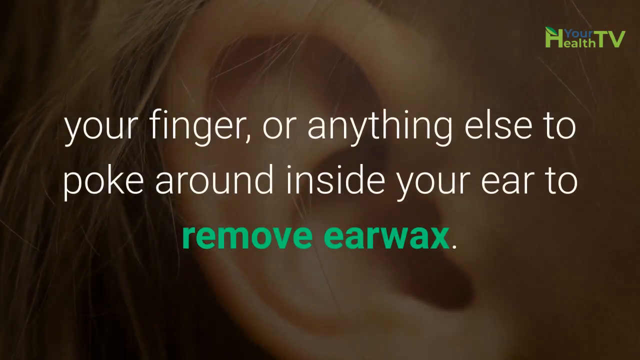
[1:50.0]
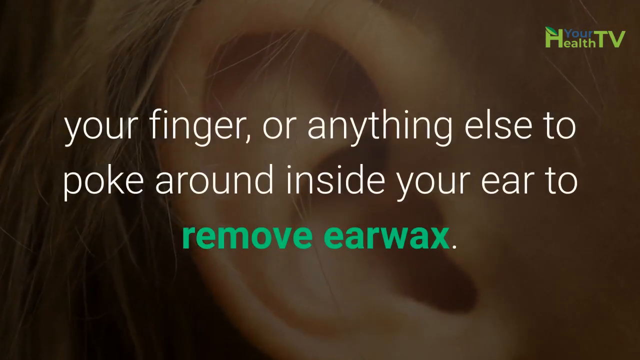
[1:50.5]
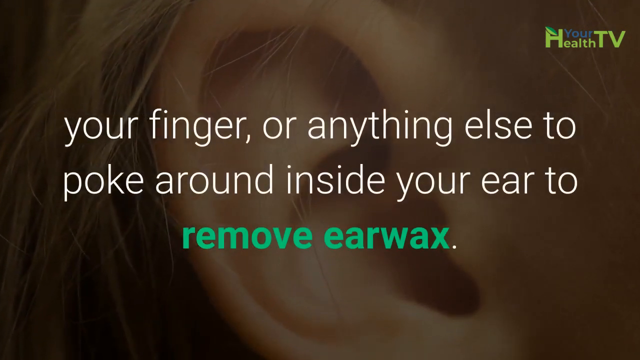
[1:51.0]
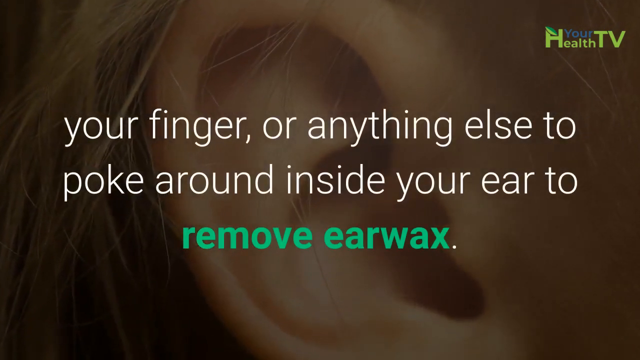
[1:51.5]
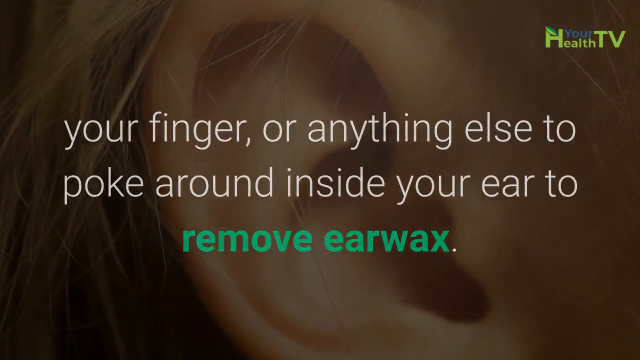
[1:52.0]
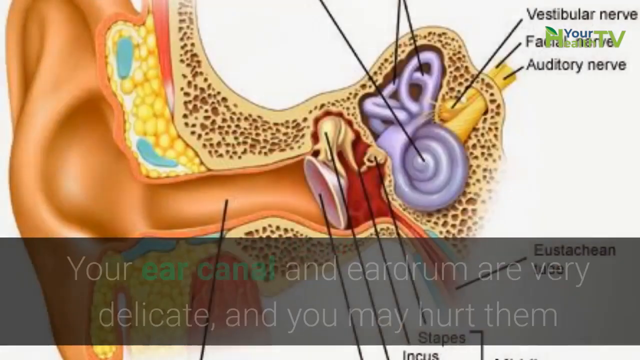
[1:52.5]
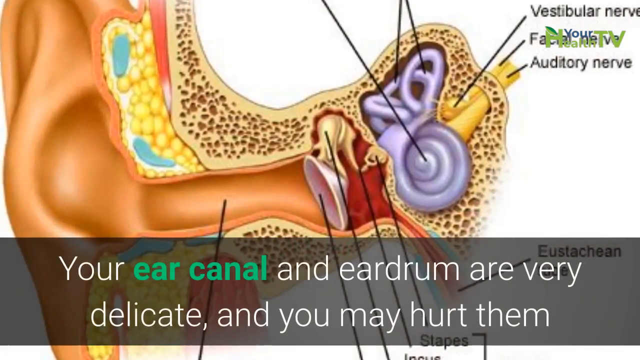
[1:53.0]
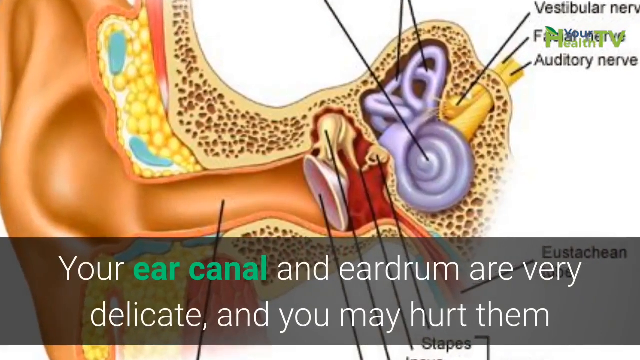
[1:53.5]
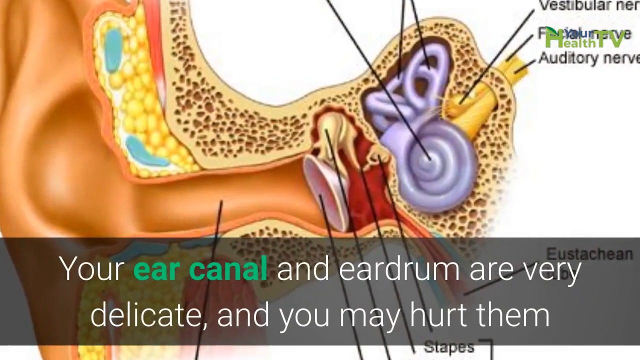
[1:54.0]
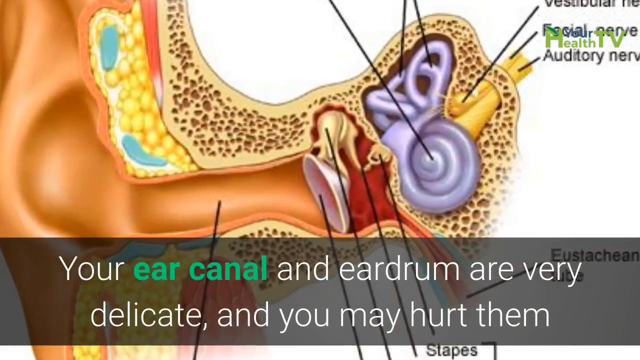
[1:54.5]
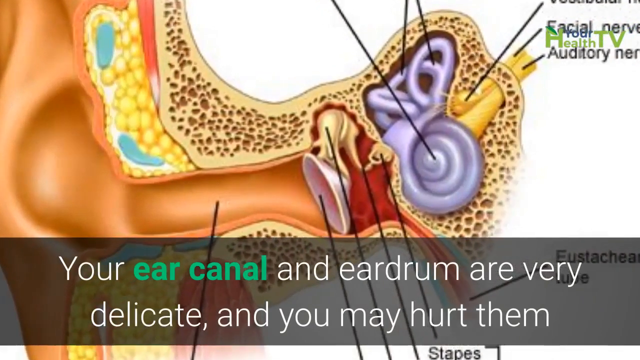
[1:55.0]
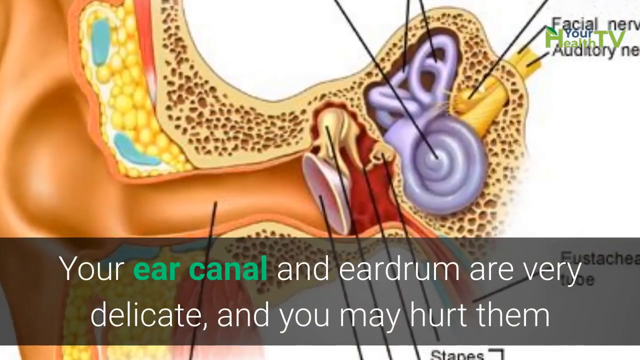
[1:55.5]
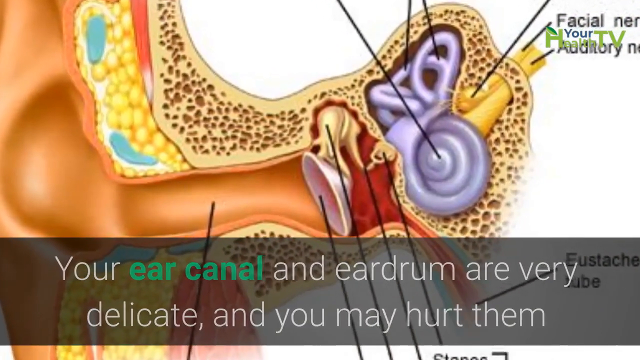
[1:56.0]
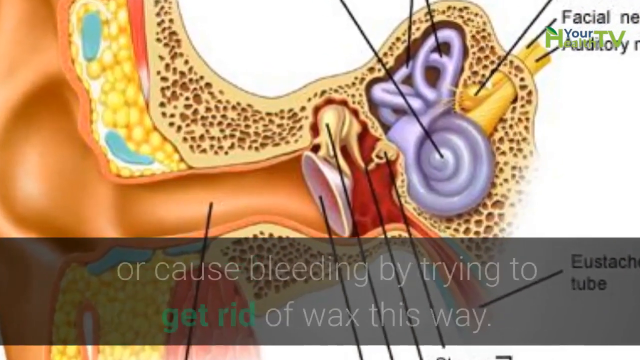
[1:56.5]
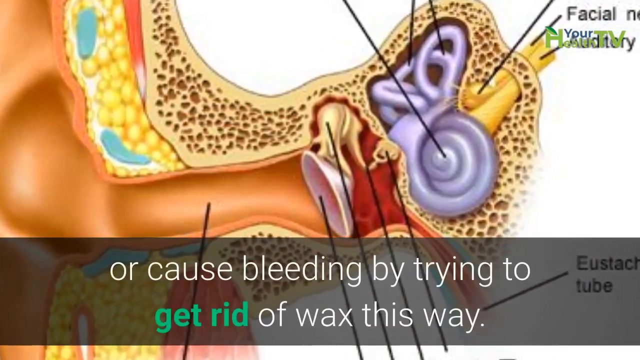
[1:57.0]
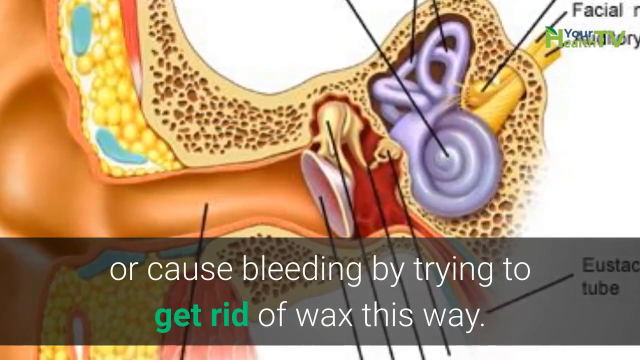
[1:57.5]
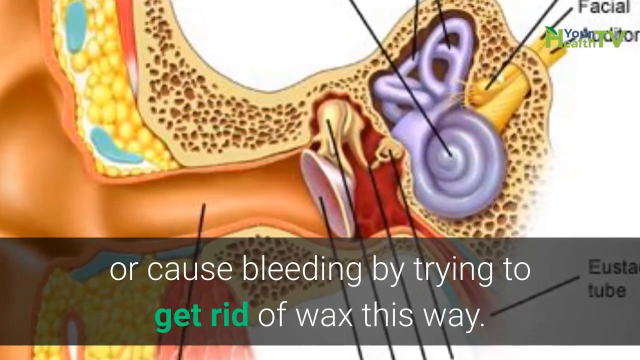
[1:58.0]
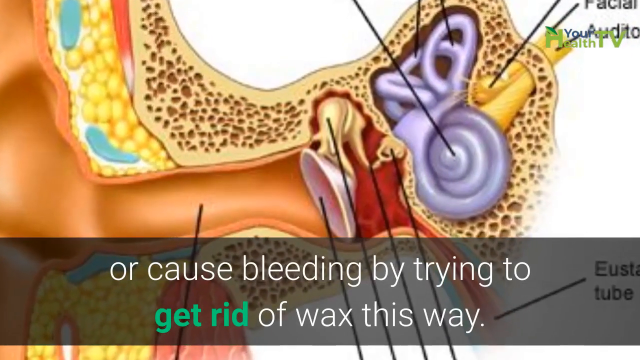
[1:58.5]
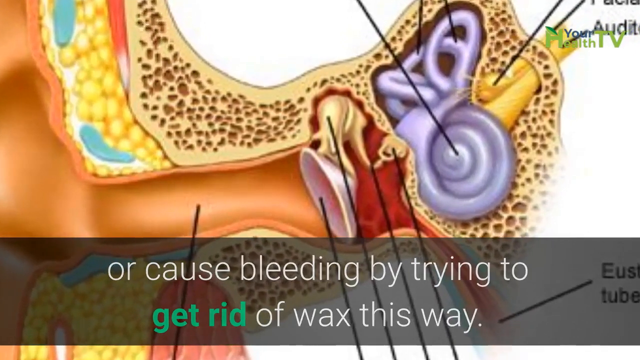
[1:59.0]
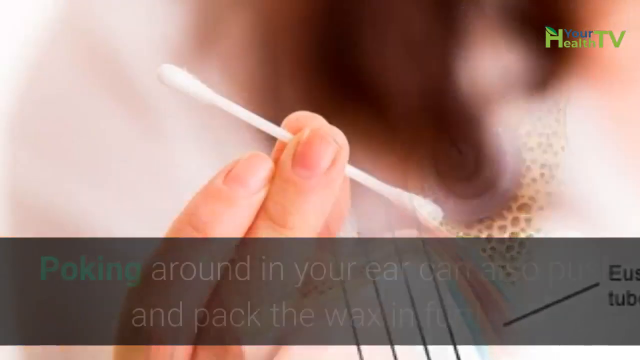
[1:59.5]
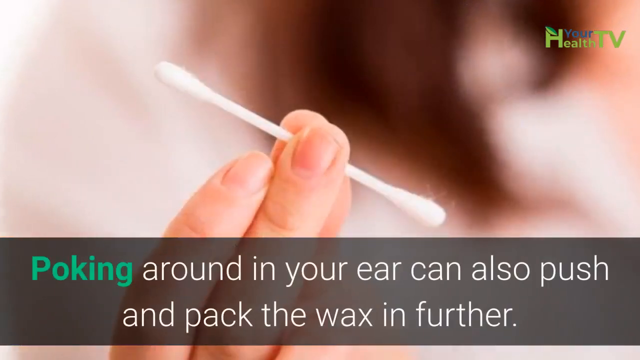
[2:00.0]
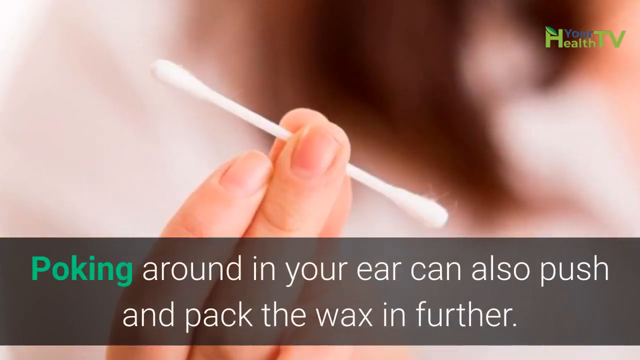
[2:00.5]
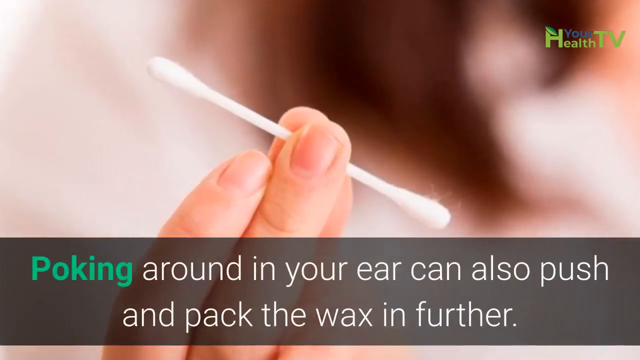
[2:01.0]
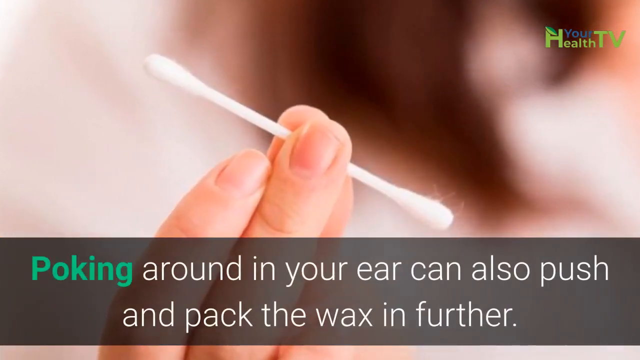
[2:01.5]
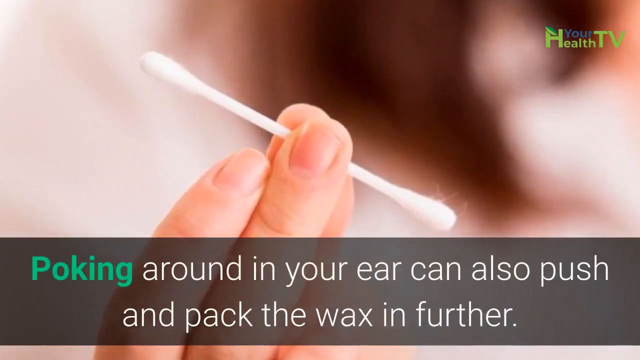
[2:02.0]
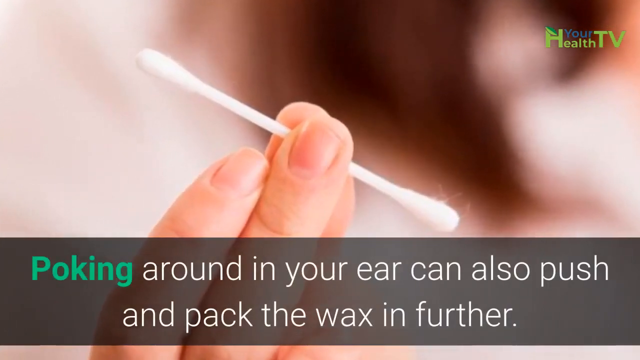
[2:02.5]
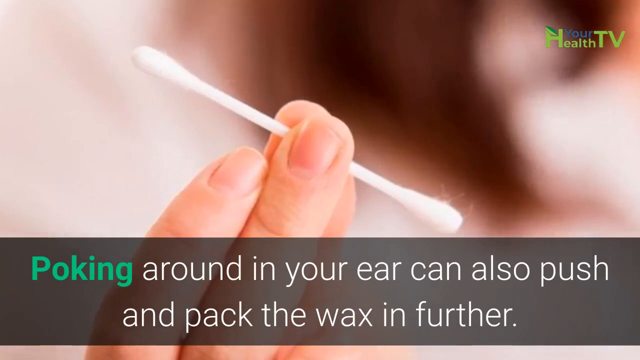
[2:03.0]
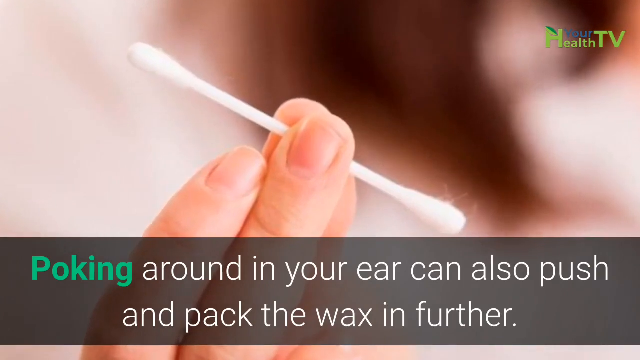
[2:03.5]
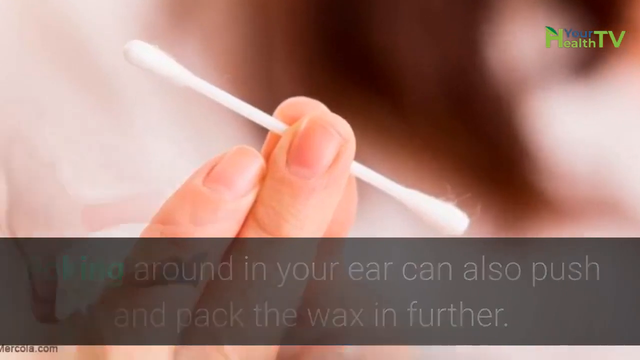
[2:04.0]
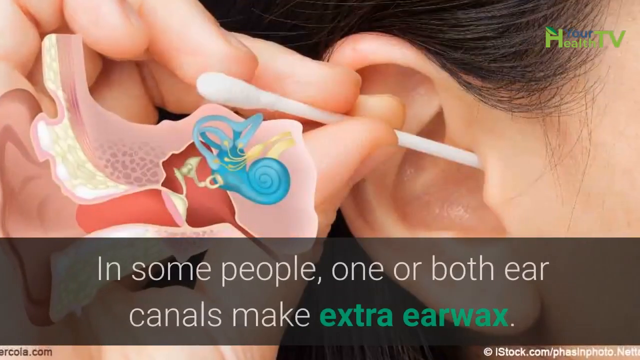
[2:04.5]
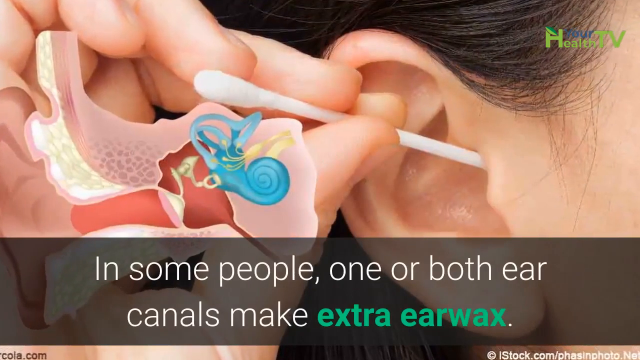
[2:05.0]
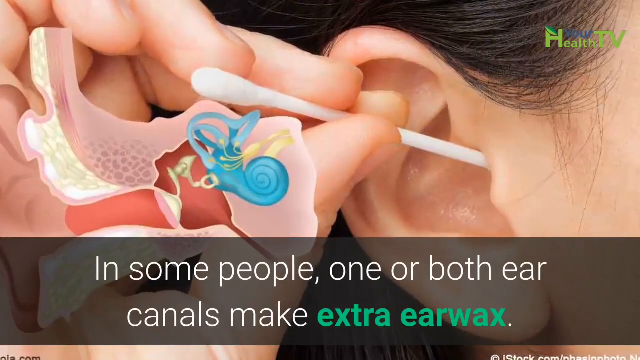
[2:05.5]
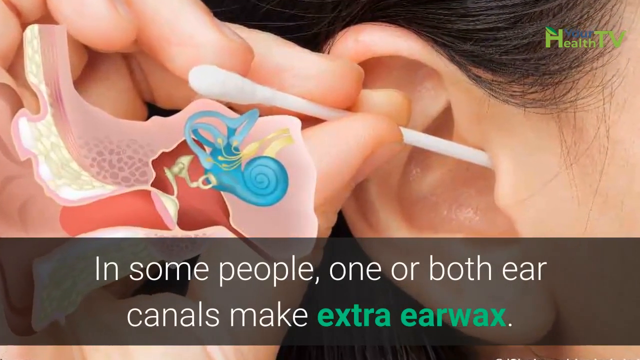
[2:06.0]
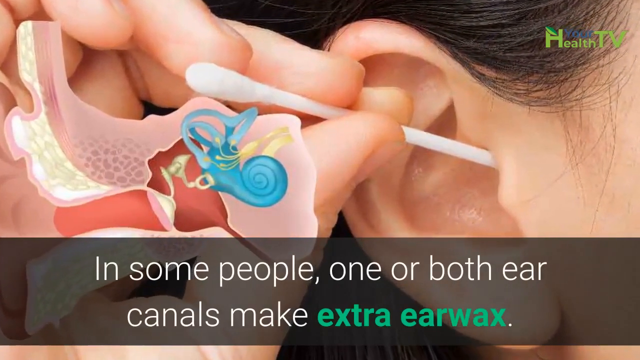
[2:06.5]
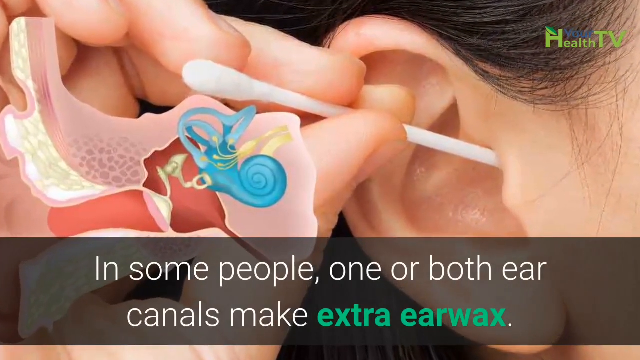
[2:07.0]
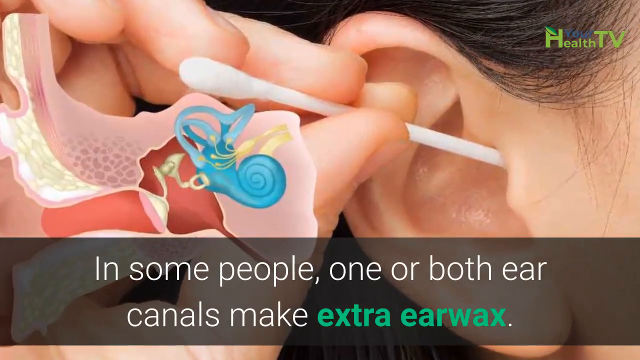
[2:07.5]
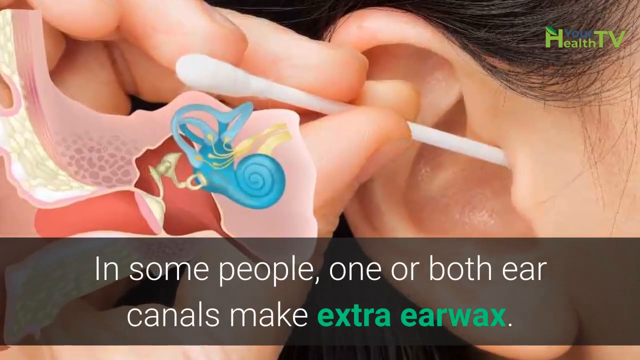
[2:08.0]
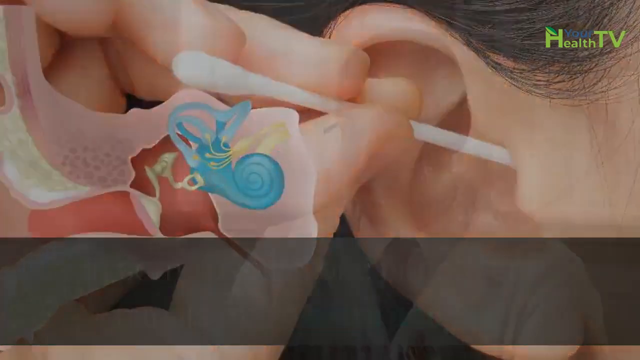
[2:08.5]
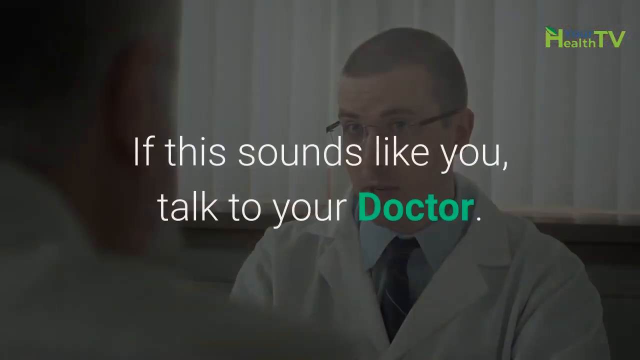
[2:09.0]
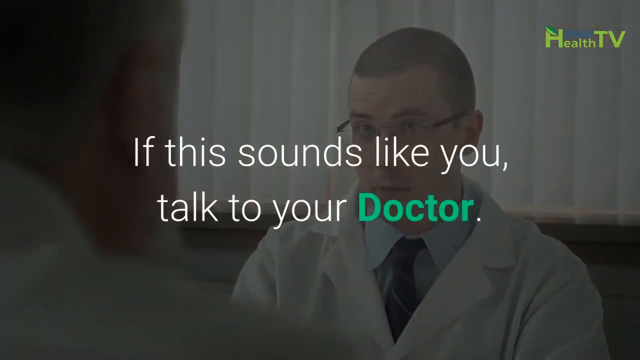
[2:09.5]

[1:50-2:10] A different cross-section of an ear shows its parts in different colors, including a portion of the outer ear and the ear canal. Labeled parts include the vestibular nerve, the auditory nerve, the Eustachian tubes, the outer ear canal and the inner ear canal, though some labels are cut off by the framing. Text reads "your ear canal and eardrum are very delicate and you may hurt them or cause bleeding by trying to get rid of wax this way." A different image shows just a hand holding up a Q-tip, with the text "poking around in your ear can also push and pack the wax in further" and "and some people, one or both ear canals make extra earwax. If this sounds like you, talk to your doctor."